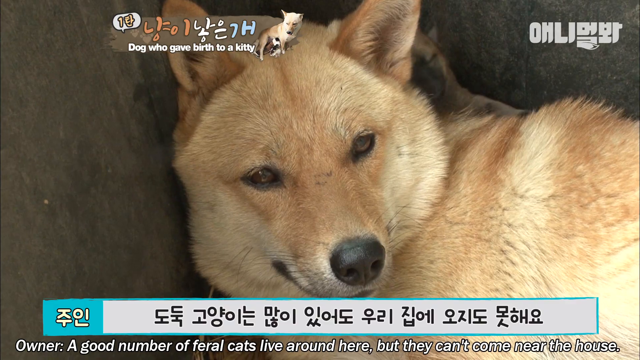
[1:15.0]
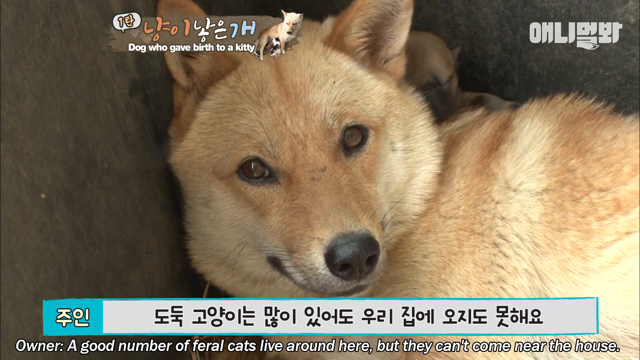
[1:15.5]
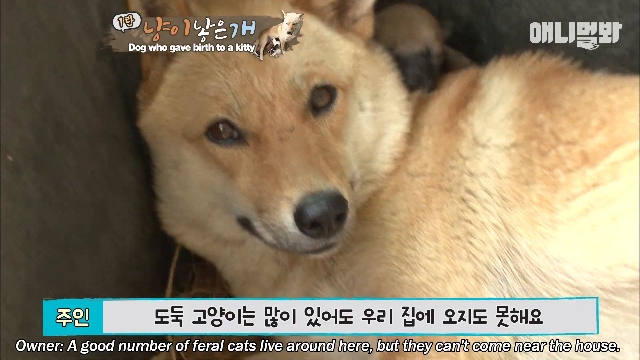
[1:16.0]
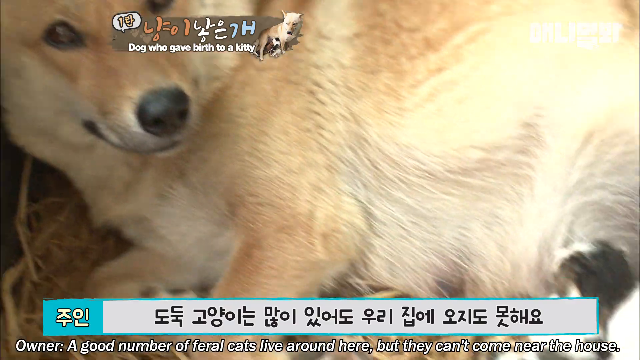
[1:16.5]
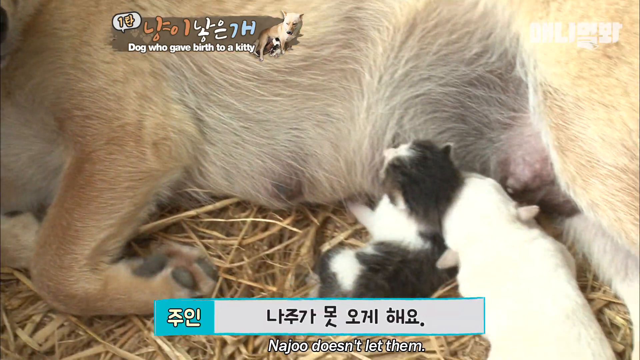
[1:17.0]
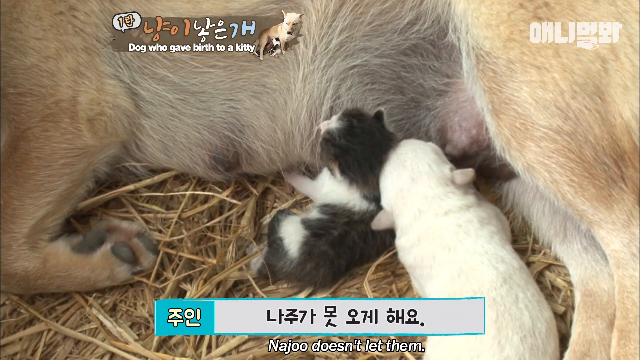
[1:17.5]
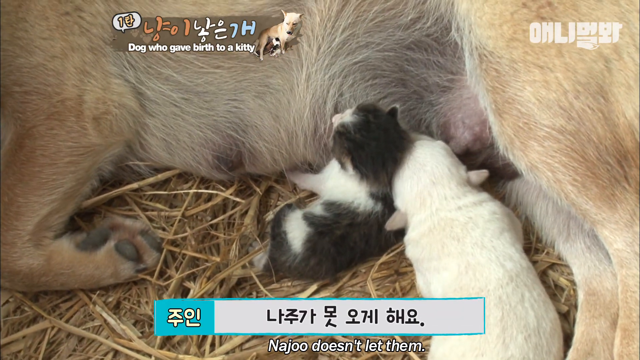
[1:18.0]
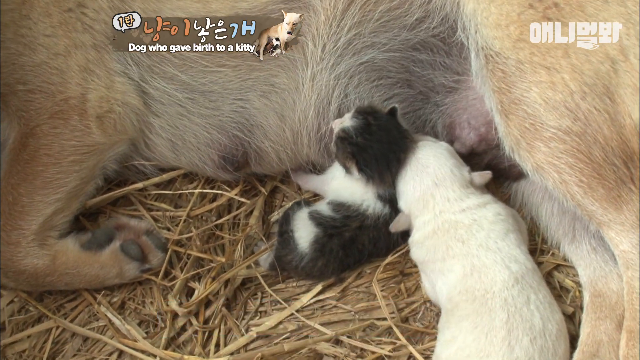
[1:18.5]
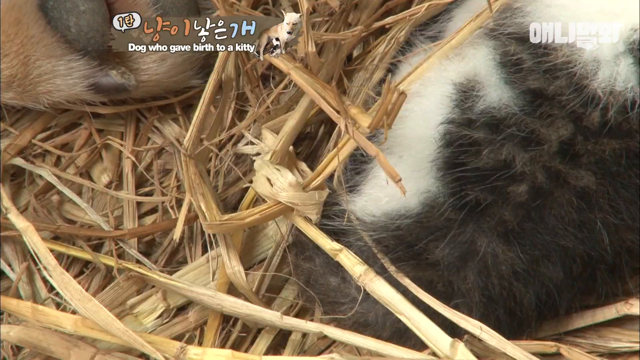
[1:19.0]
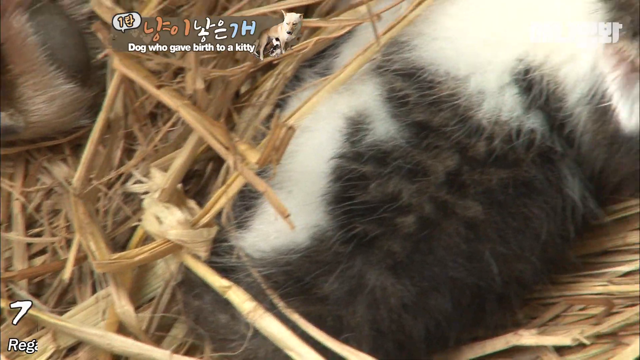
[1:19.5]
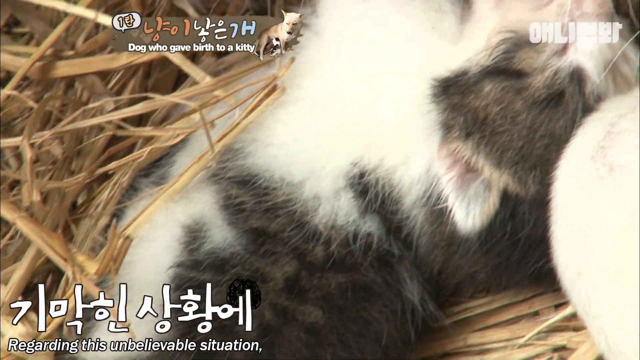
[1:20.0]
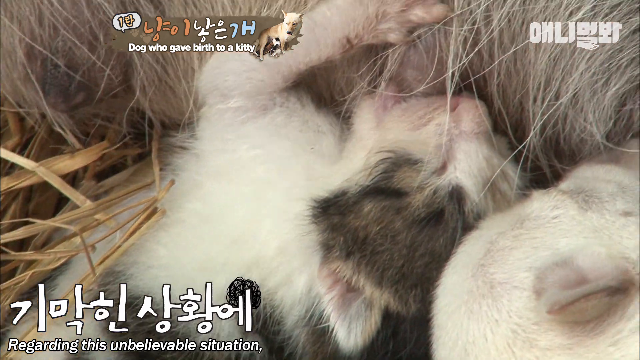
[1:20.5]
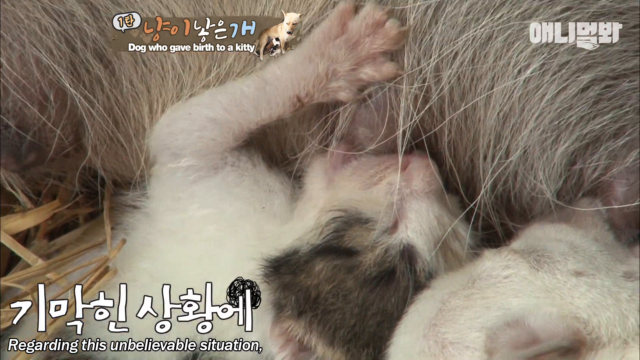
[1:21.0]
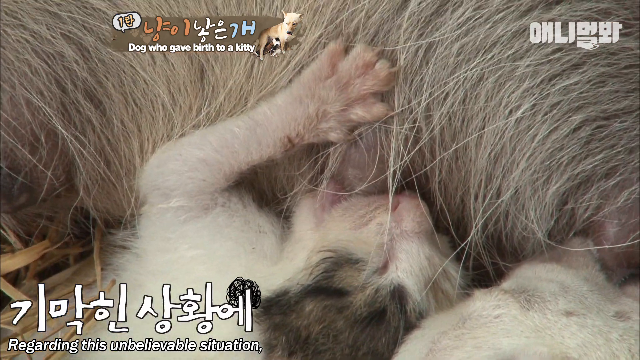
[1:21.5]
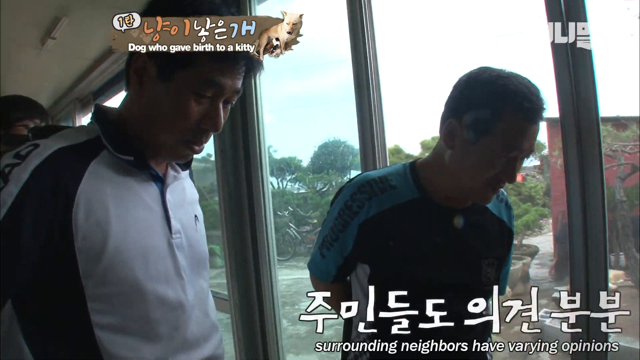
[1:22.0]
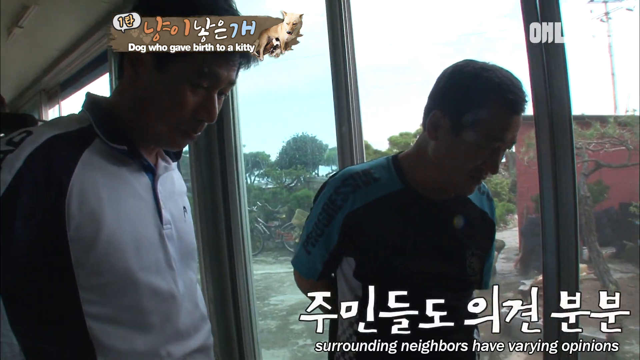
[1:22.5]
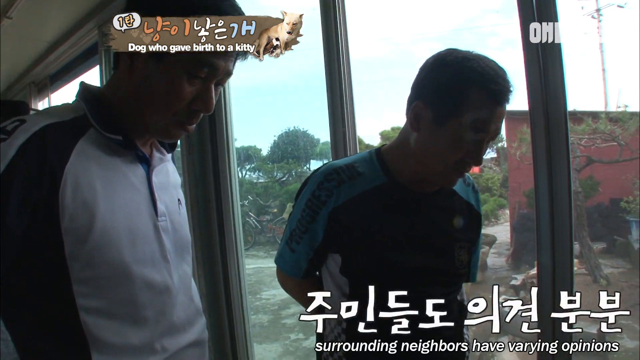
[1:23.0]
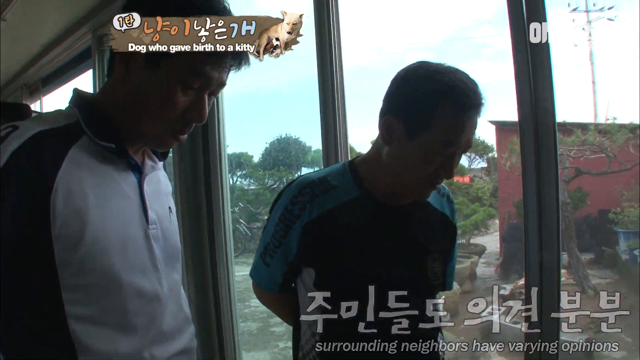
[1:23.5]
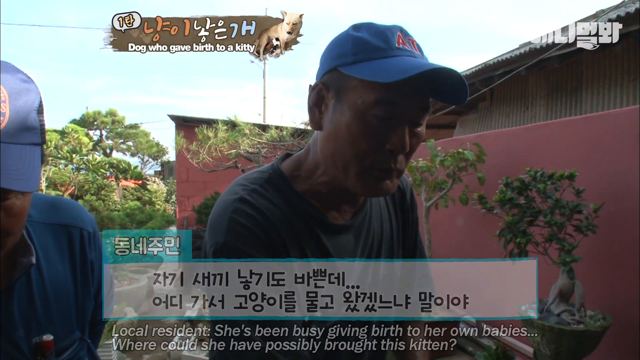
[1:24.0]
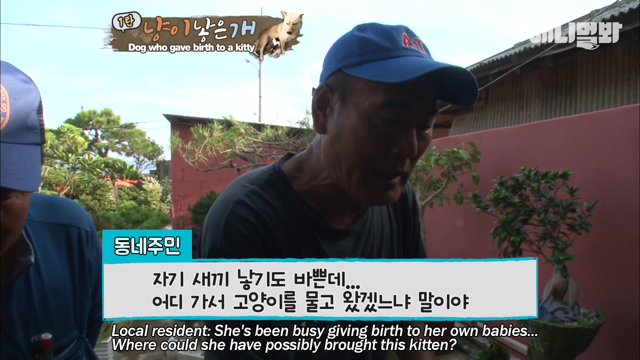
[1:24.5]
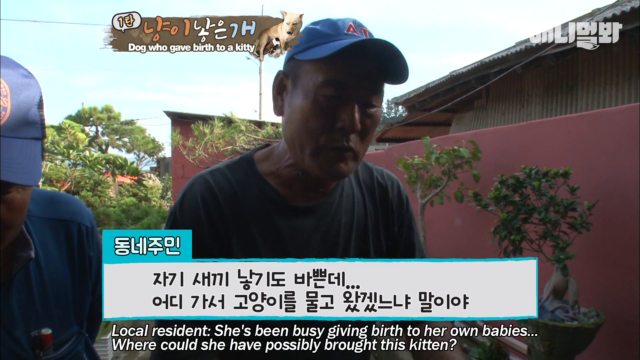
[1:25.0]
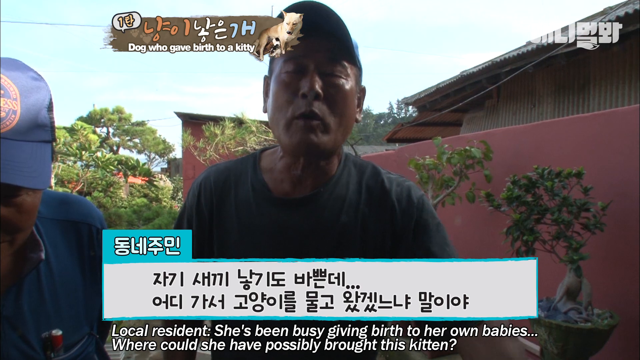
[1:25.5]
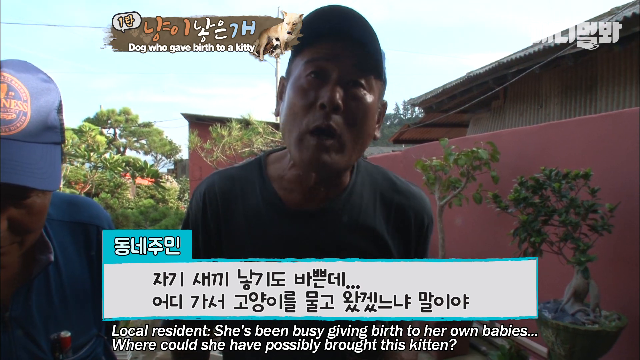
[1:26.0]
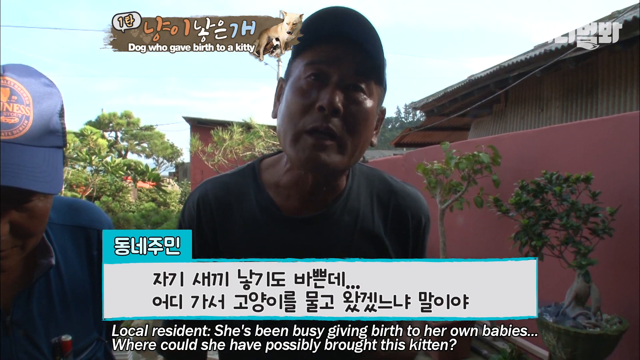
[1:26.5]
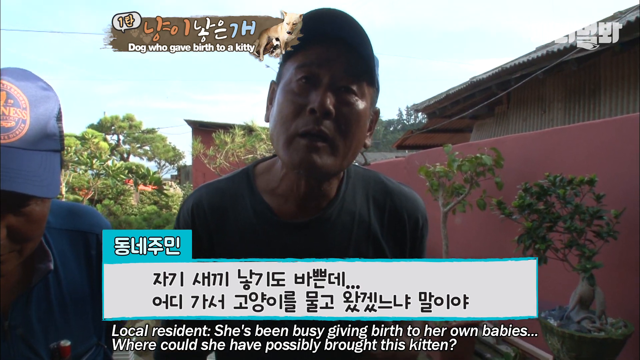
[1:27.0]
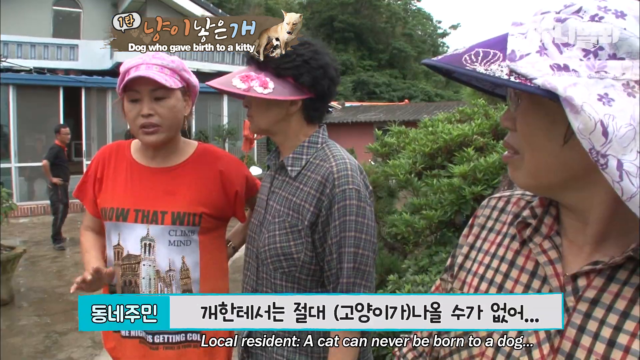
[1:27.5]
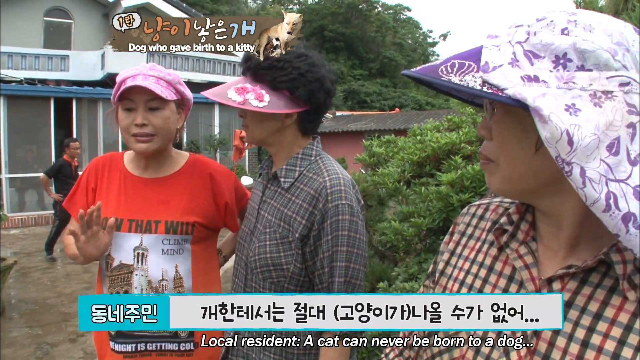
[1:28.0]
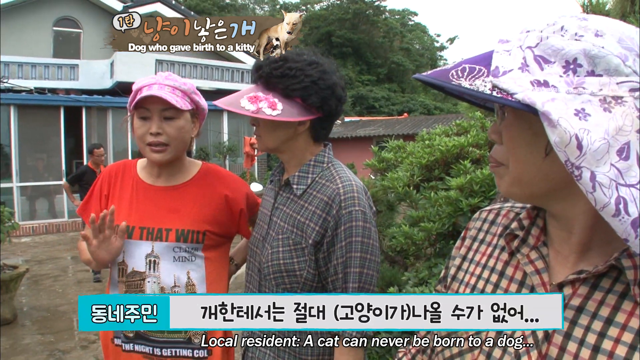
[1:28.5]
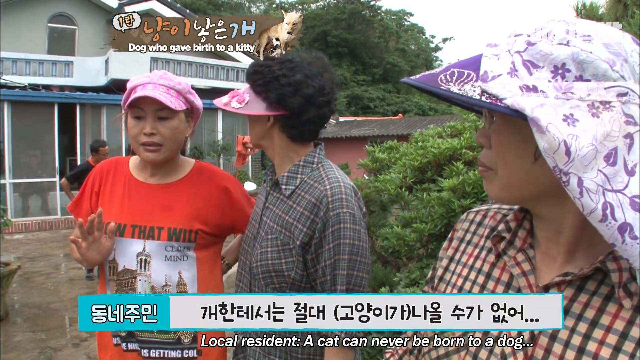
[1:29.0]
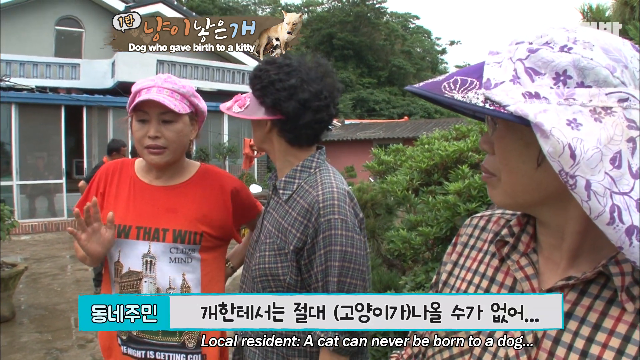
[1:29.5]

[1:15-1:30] Multiple settings and angles are shown, seemingly in the same area. One is the enclosure with straw bedding, where the puppies, a kitten and an adult dog all sleep and nurse together. The video also cuts to different groups of Asian people, who seem to be discussing the animals. Chinese and English subtitles describe what these people are saying: that the cat could have been born to the dog, a theory some people apparently hold, while multiple people reject it as impossible and say the cat just showed up and bonded with the dogs.